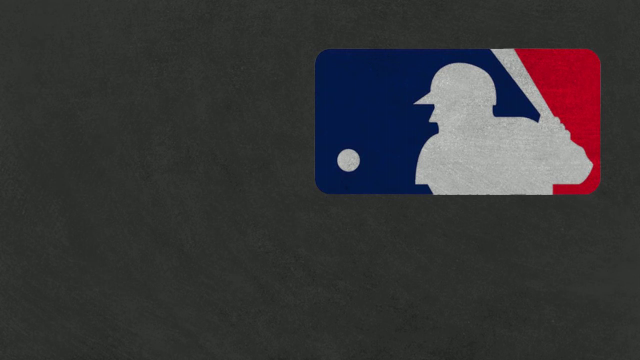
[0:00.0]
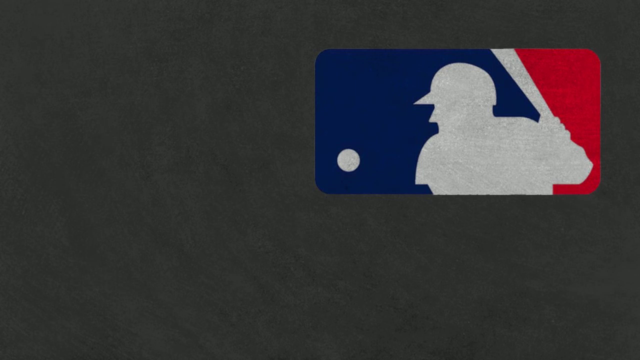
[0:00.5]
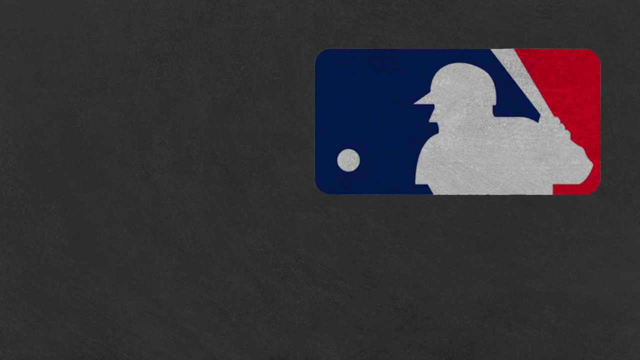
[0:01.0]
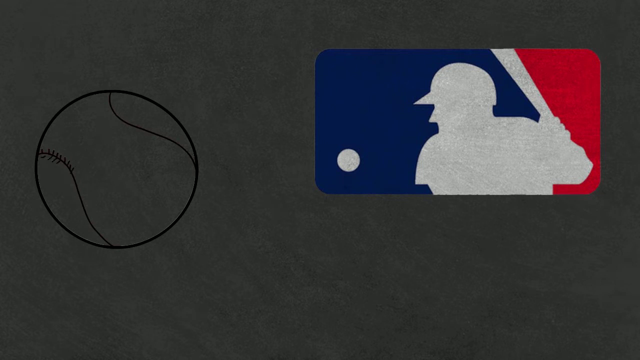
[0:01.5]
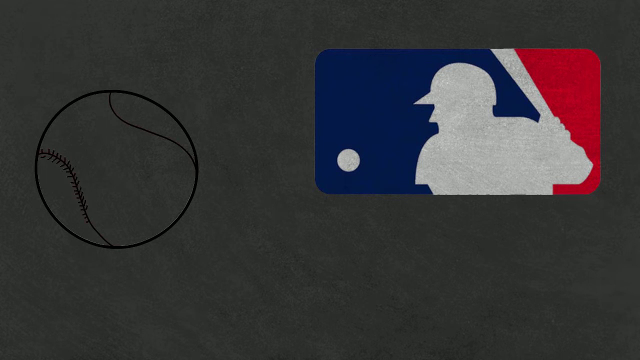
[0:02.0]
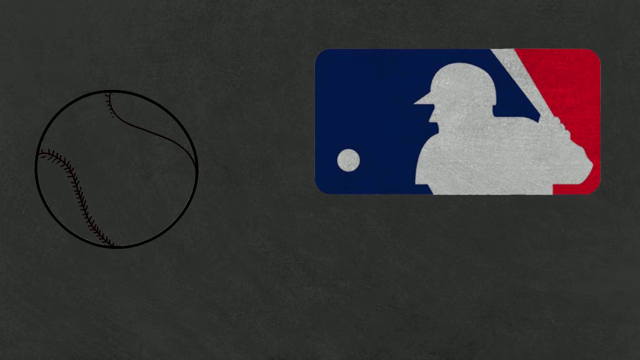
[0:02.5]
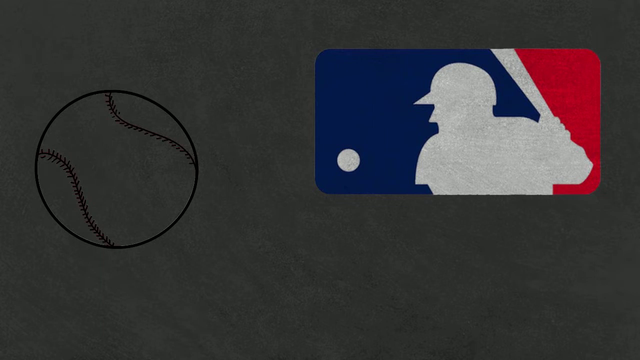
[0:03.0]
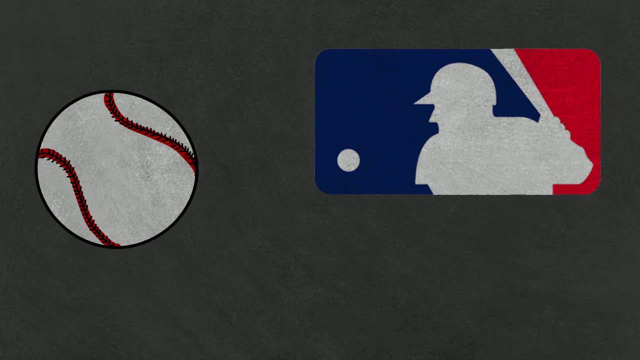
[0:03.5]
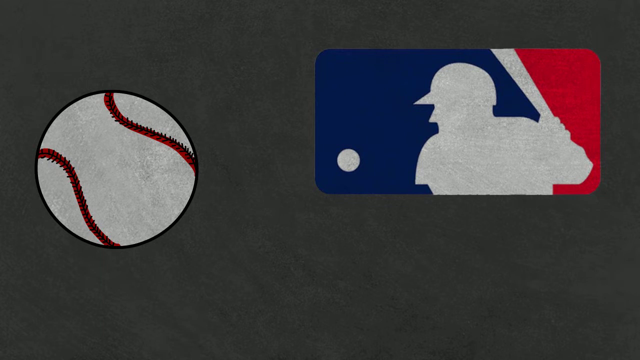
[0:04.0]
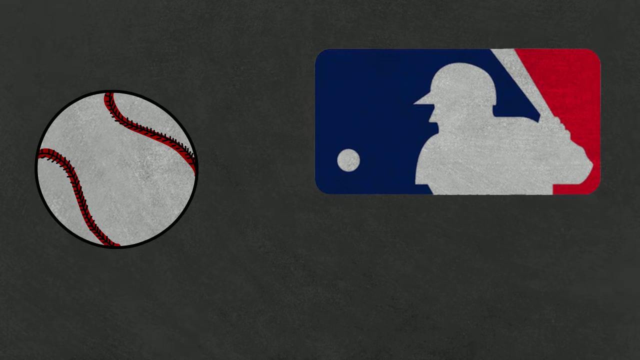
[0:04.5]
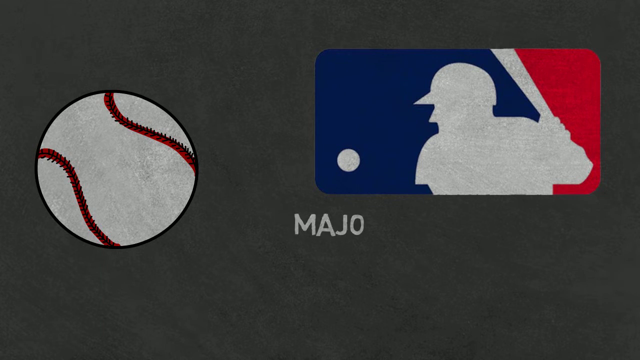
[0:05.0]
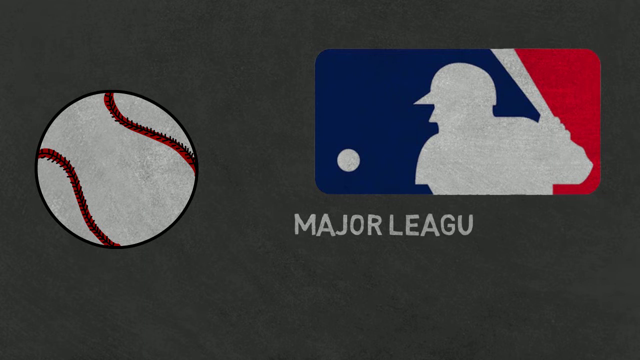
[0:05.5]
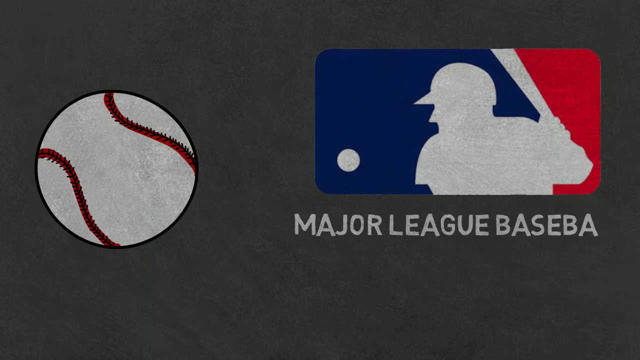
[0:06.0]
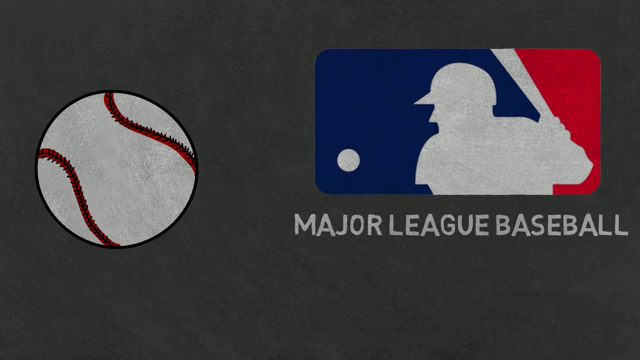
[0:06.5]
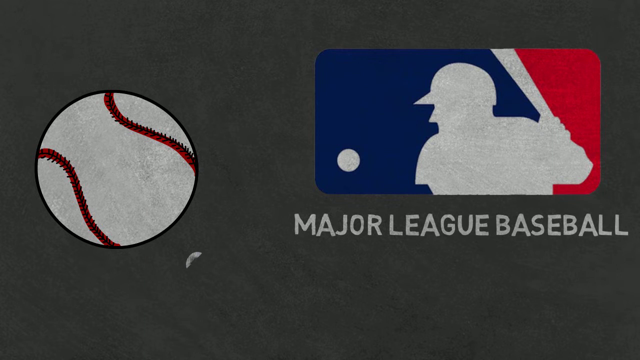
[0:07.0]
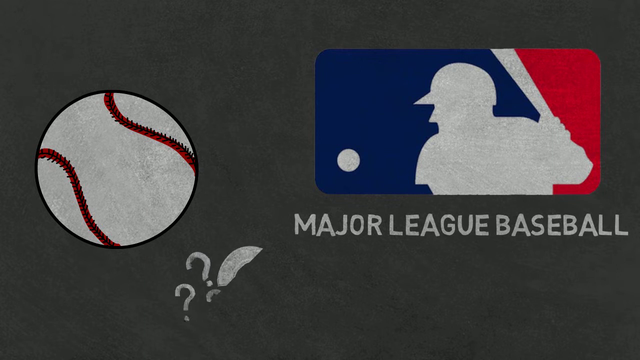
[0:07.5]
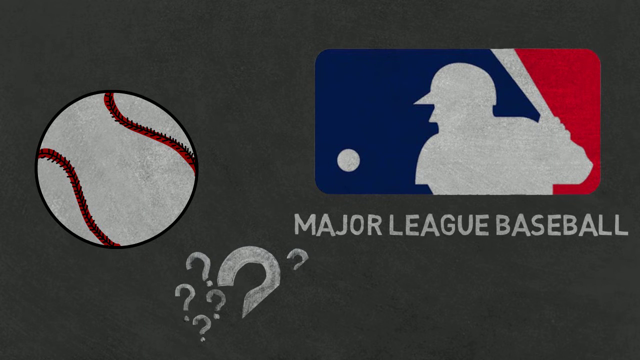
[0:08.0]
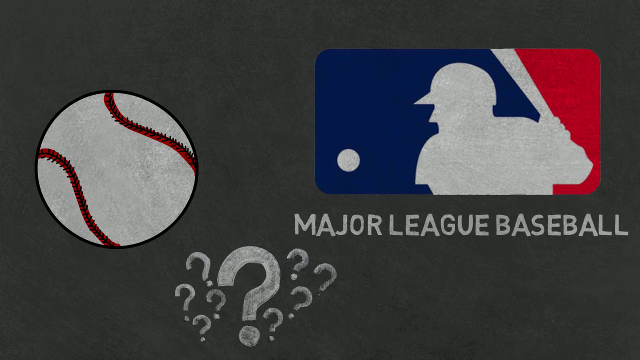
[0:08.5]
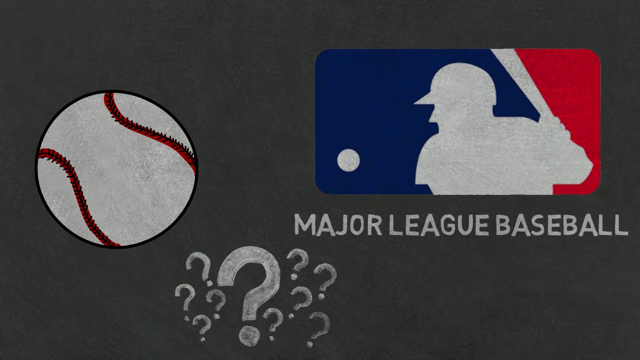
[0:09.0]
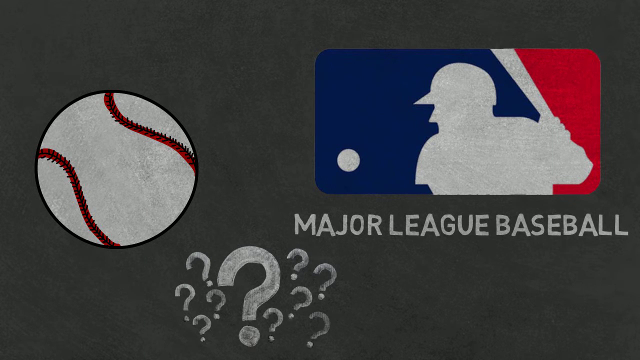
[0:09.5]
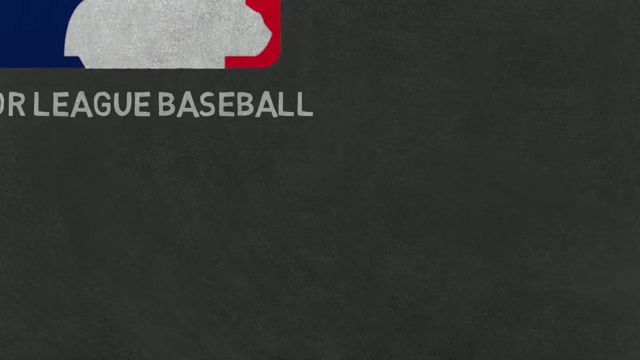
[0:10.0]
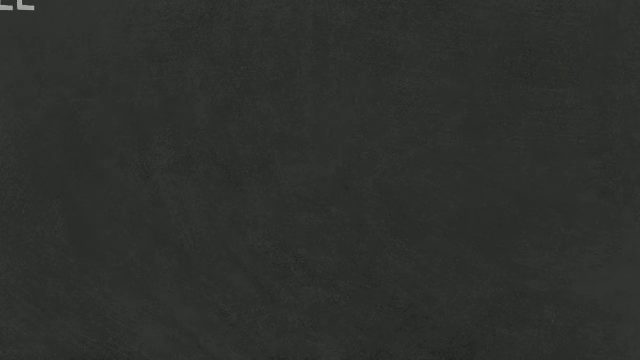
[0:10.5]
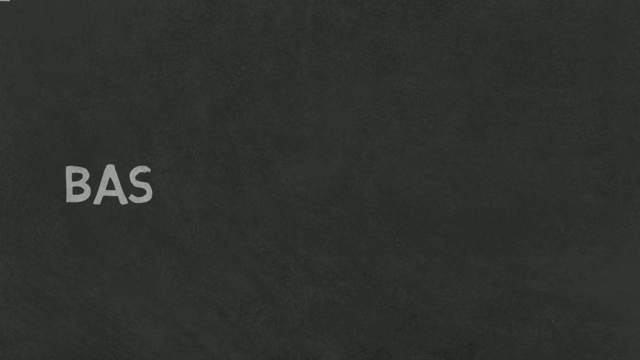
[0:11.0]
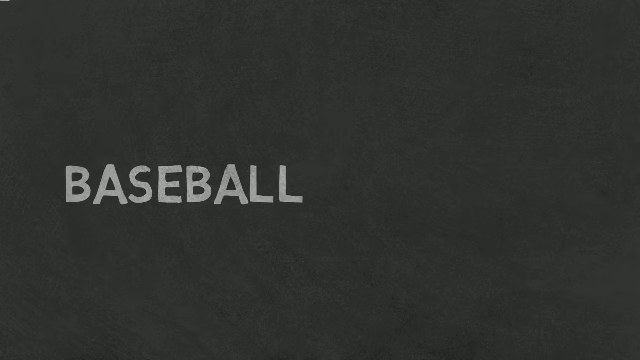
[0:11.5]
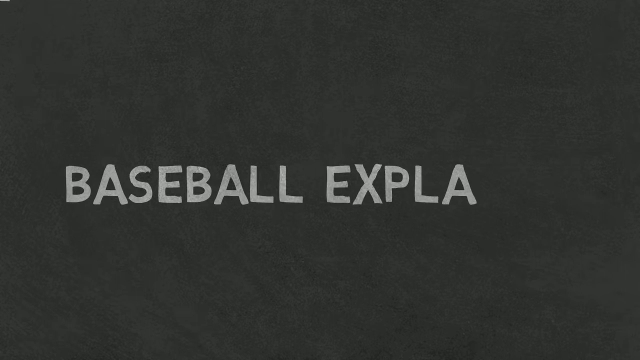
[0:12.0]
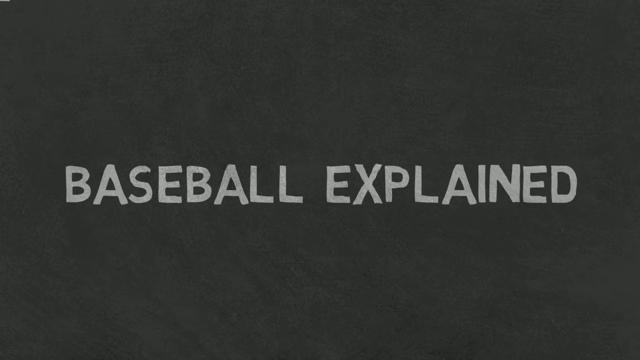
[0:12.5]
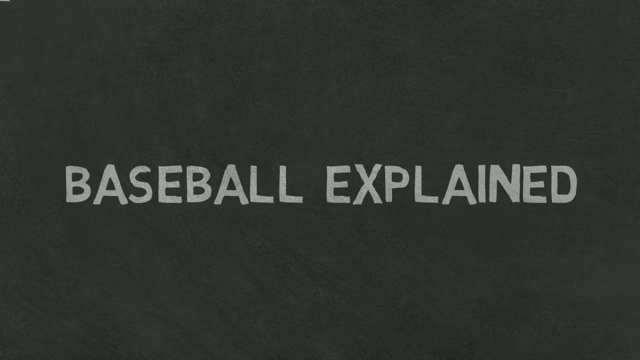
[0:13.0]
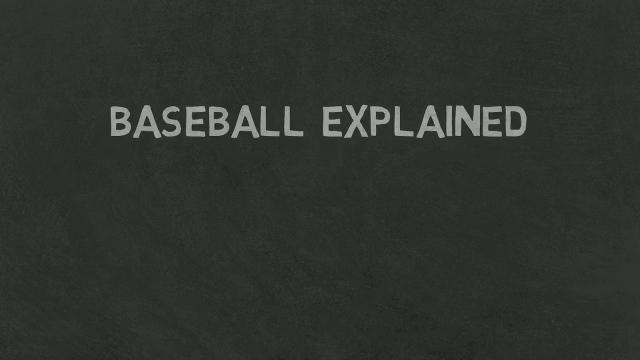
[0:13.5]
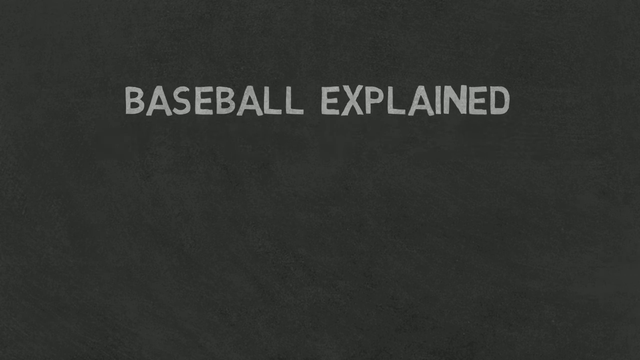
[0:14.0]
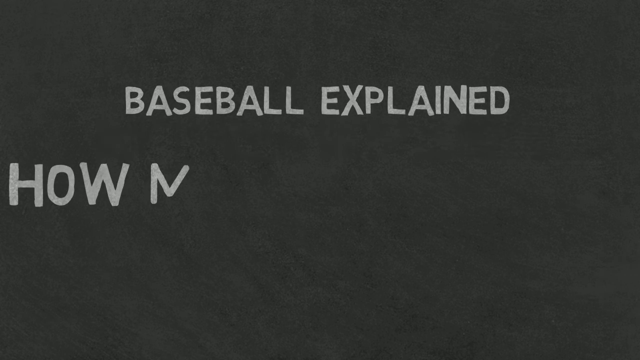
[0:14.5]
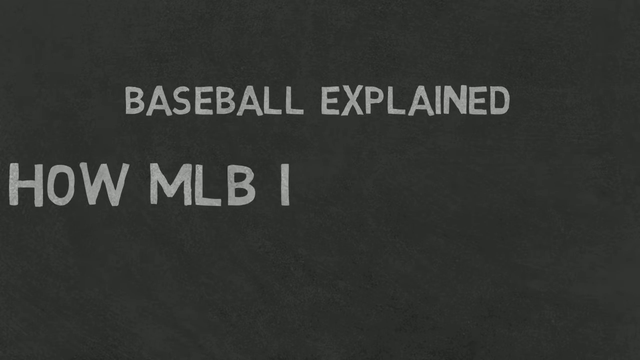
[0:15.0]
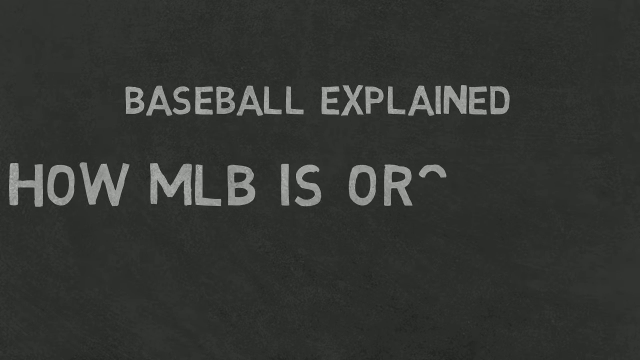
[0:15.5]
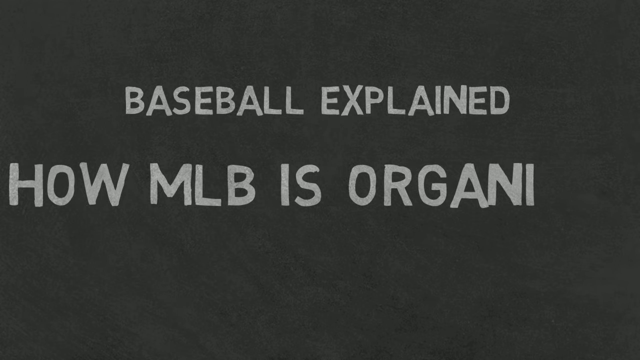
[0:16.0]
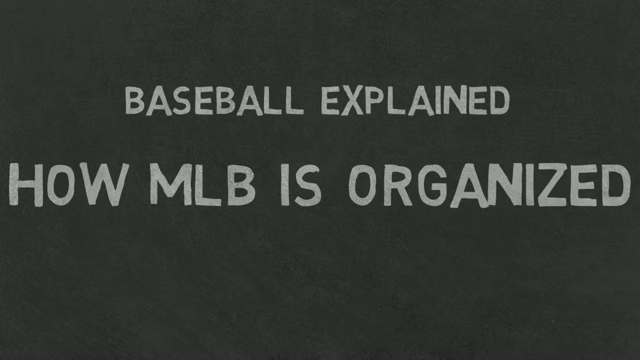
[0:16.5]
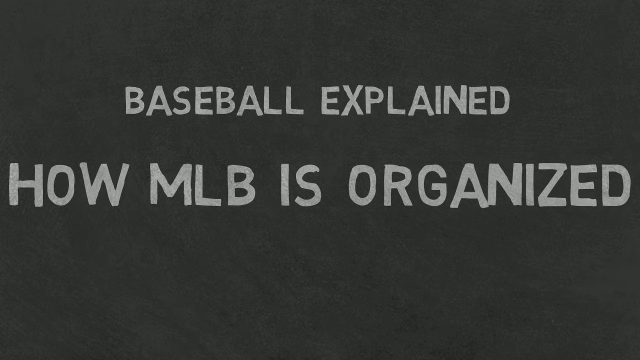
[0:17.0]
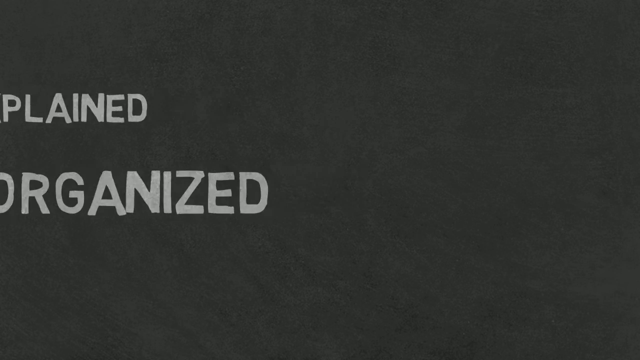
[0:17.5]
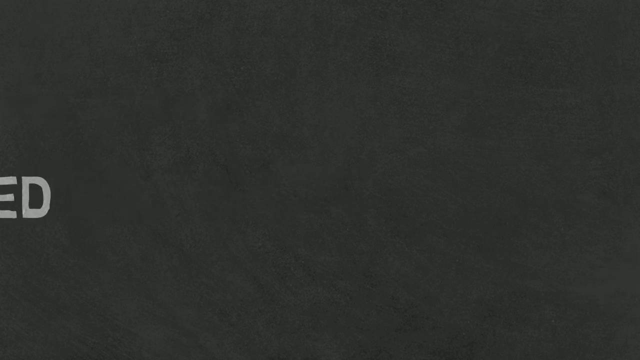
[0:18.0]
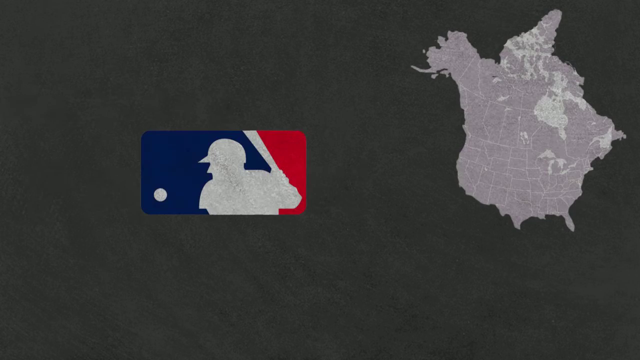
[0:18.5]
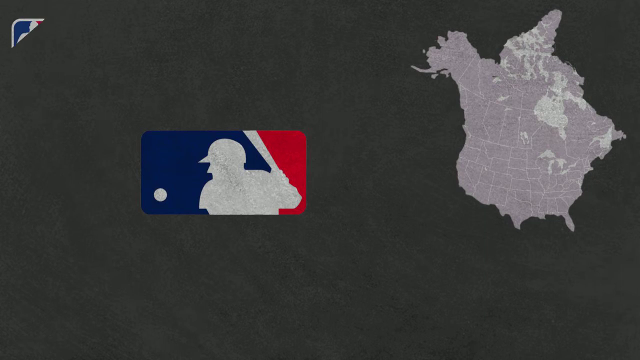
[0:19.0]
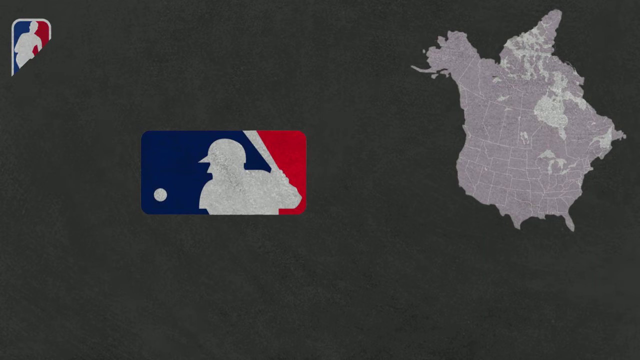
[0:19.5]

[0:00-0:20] On a gray background, a simple Major League Baseball logo appears along with a baseball icon and some question marks, presented as a simple slideshow-style animation. The MLB logo is on the right side, with a drawing effect that makes everything look drawn in. On the left side, a baseball image is first outlined and then colored in white. The text "Major League Baseball" shows up with a bunch of question marks, then shifts to the side, and the text "baseball explained" appears. The view zooms out and "how MLB is organized" appears in large letters. The view then pans over to a map of North America, with the NBA logo in the top left corner and the MLB logo in the middle.